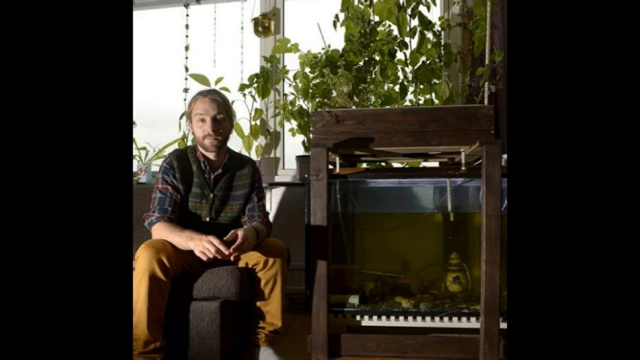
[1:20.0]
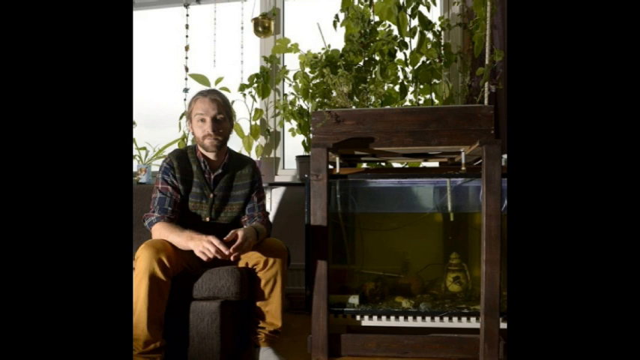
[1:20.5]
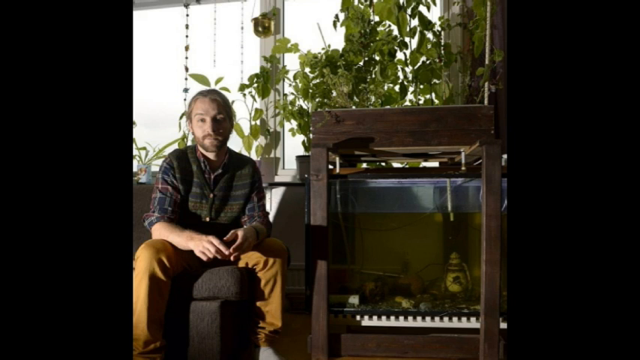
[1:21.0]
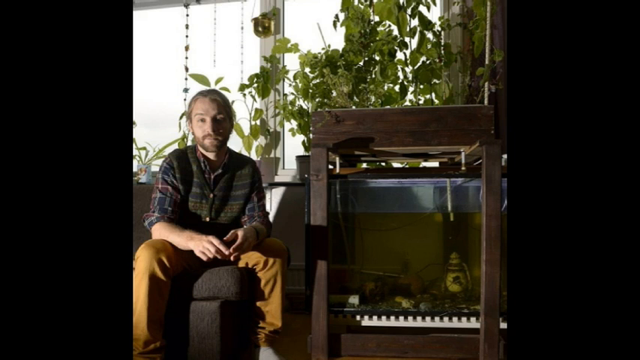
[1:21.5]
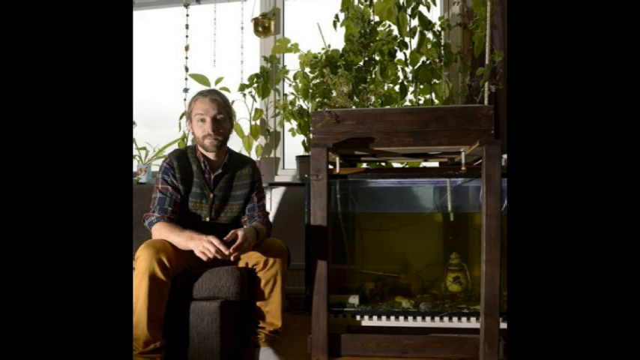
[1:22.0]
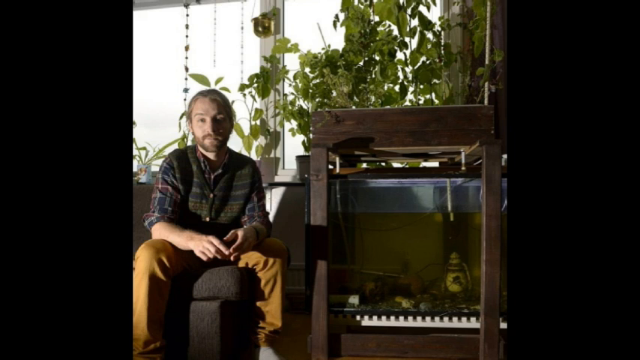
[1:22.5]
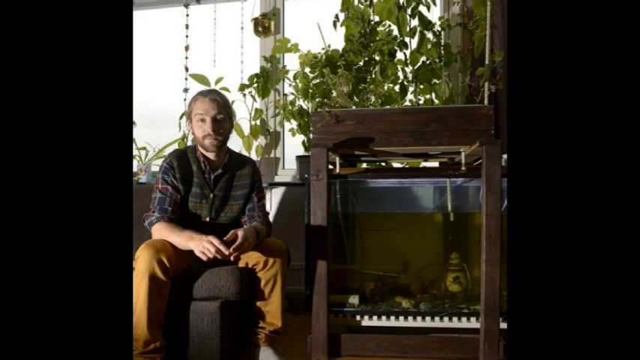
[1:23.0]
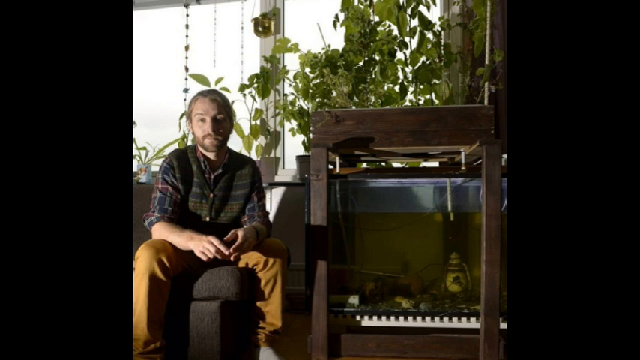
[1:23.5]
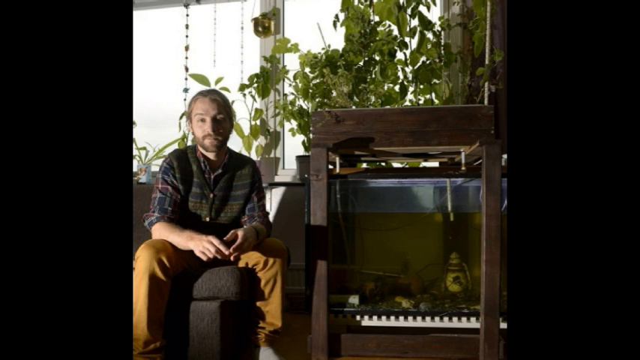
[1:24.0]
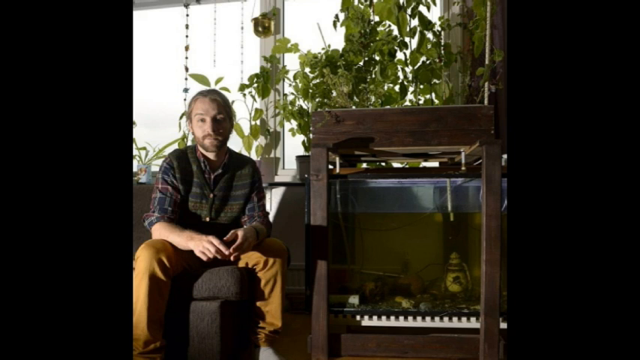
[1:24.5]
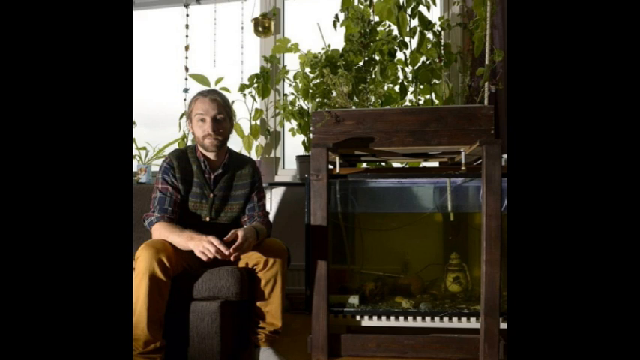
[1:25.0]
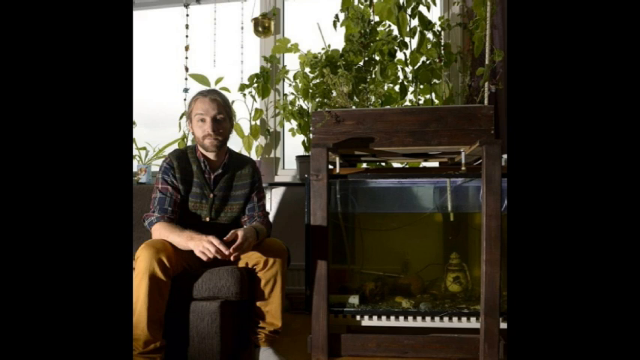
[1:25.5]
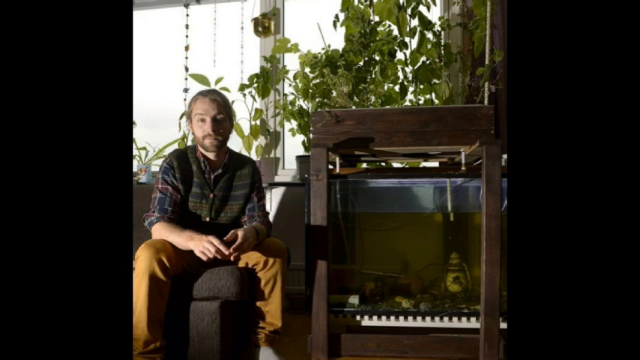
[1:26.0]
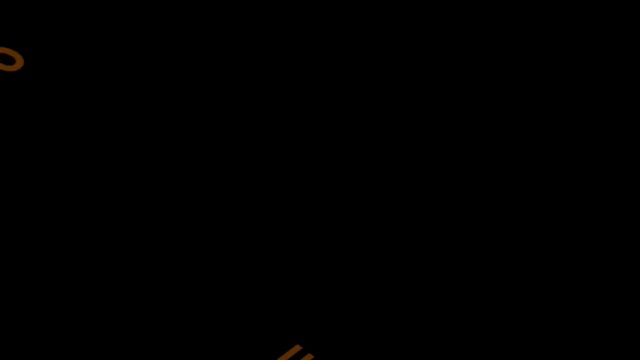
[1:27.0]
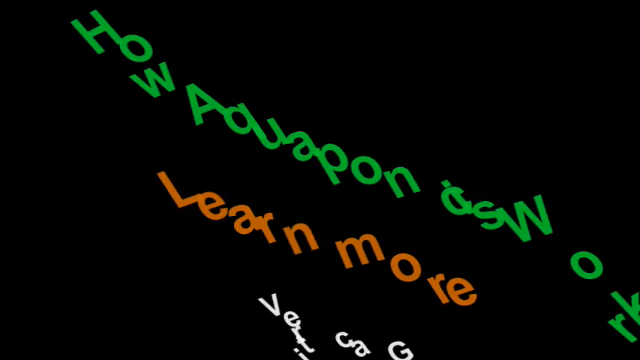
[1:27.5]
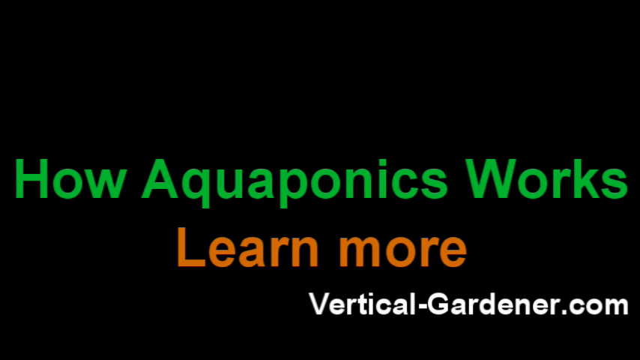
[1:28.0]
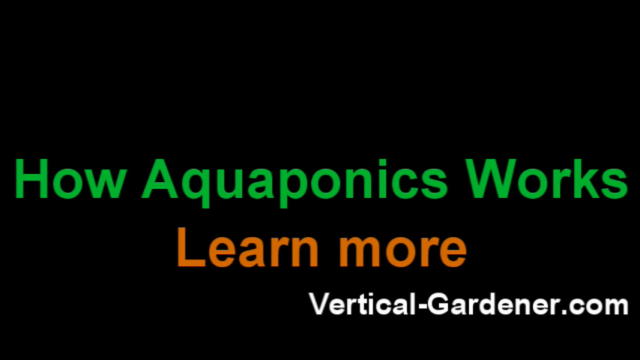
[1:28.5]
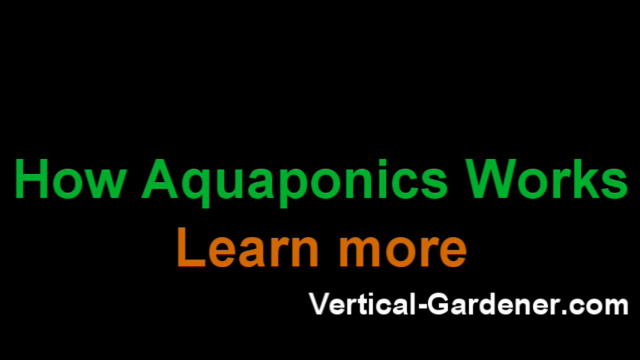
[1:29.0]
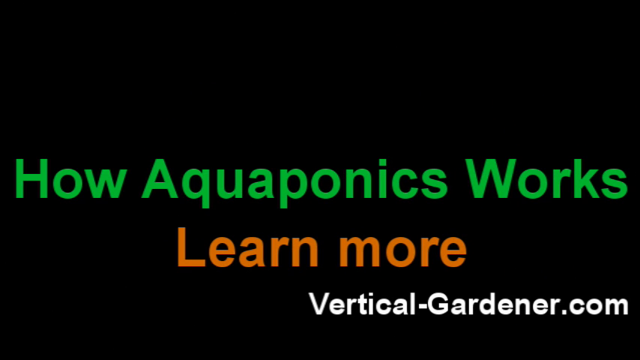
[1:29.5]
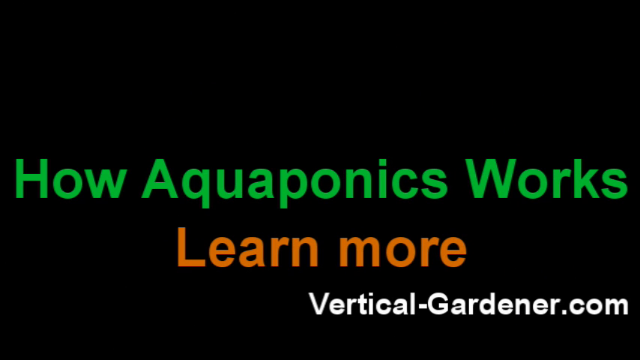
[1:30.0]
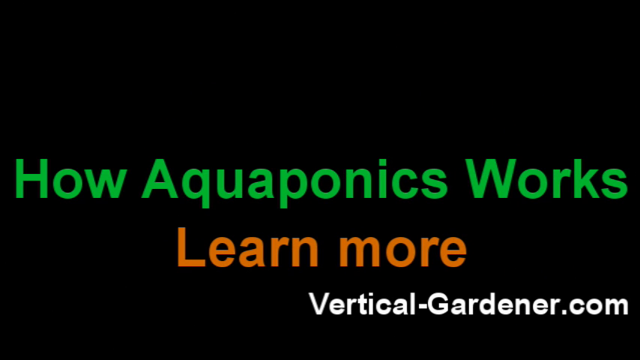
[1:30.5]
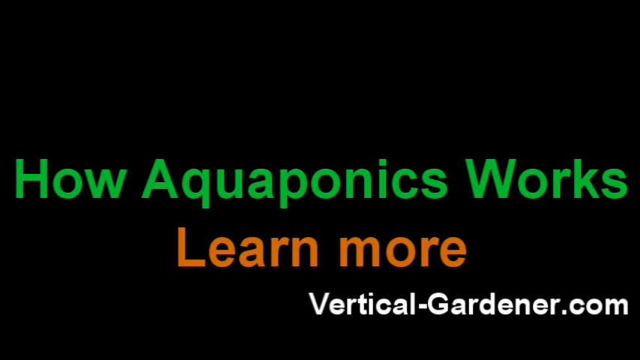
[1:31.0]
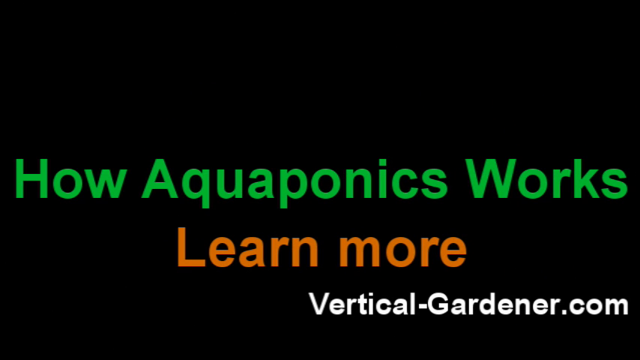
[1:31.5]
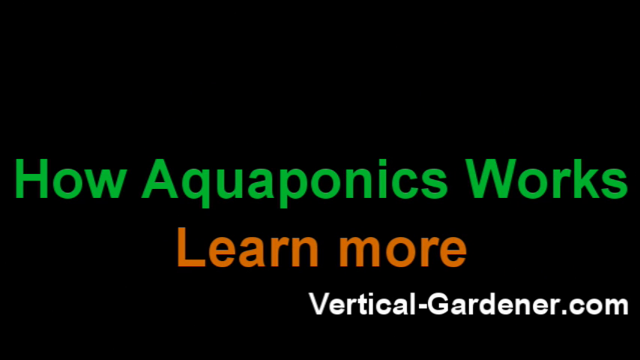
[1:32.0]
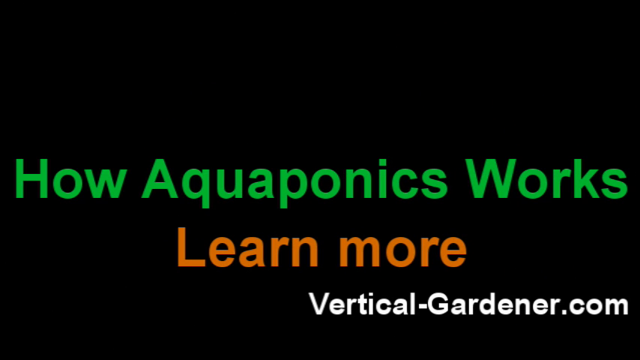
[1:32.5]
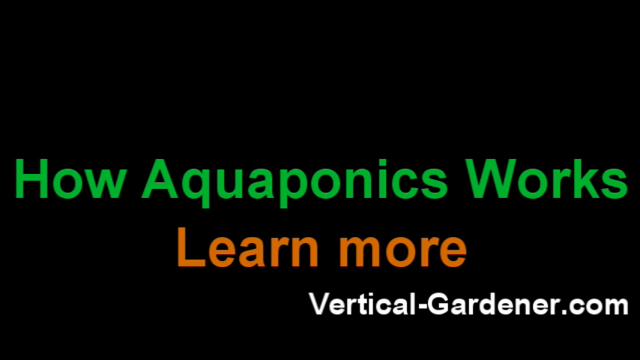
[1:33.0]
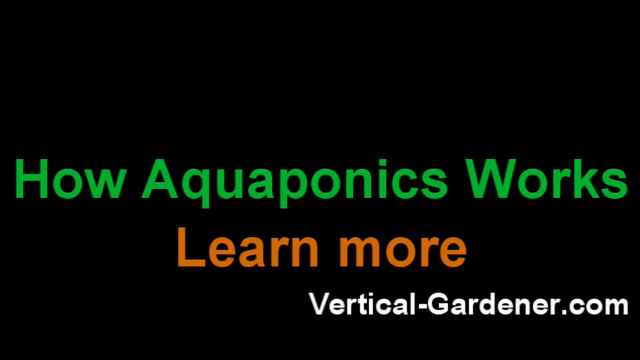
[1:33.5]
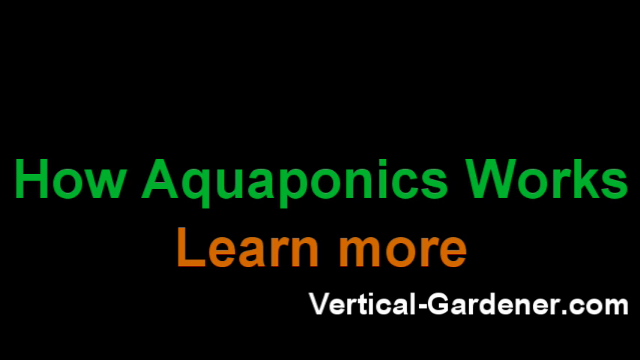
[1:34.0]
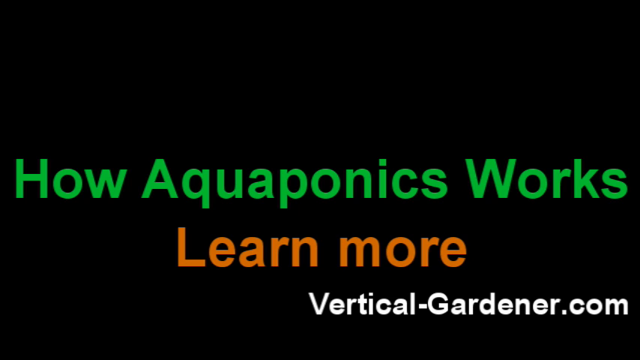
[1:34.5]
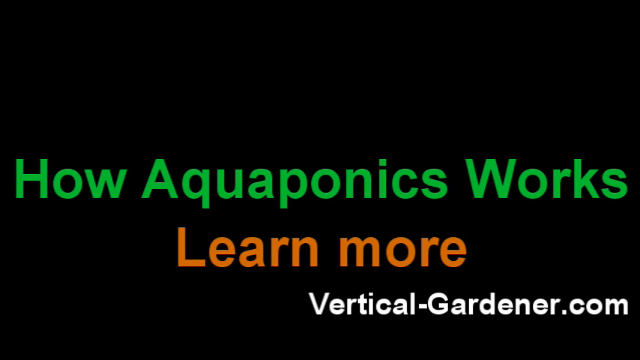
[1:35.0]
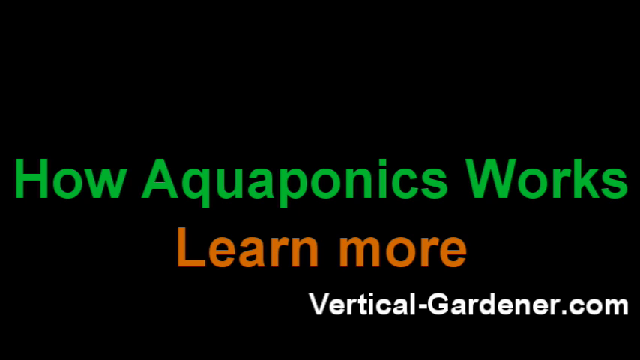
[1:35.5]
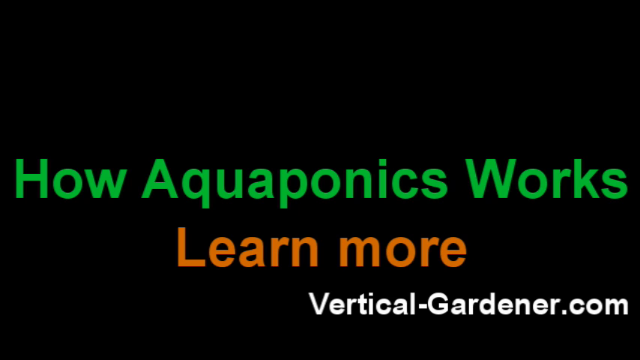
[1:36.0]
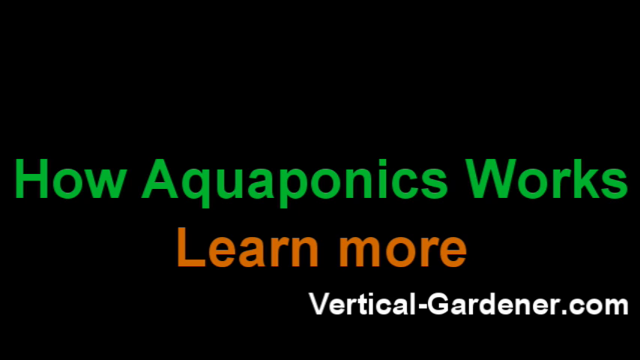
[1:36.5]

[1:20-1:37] The picture shows a man with a hydroponic fish tank. The water in the tank is really green and looks kind of full of algae, and some white tubes stick down into the tank, possibly returning water from the plants to the fish tank. The aquaponic system is hard to see in the photo. The man has quite a lot of plants behind him, which appear to be indoor house plants of the kind that grow long vines. He has long, kind of blondish hair pulled back into a ponytail and a short beard, wears a navy blue, green and maroon plaid button-down shirt and clay-colored khaki pants, and is sitting on the edge of a chair. The video then turns to an all-black page with green lettering that says "how aquaponics works", orange lettering that says "learn more", and "vertical-gardener.com" in the bottom corner.